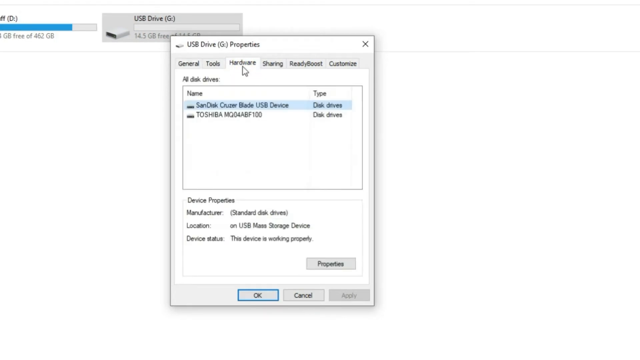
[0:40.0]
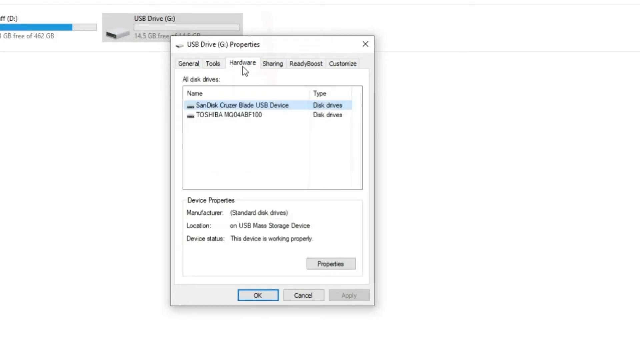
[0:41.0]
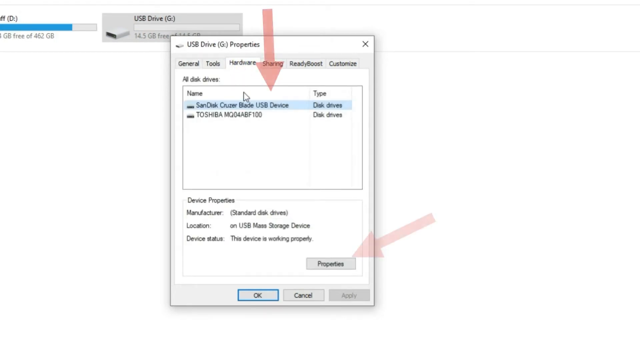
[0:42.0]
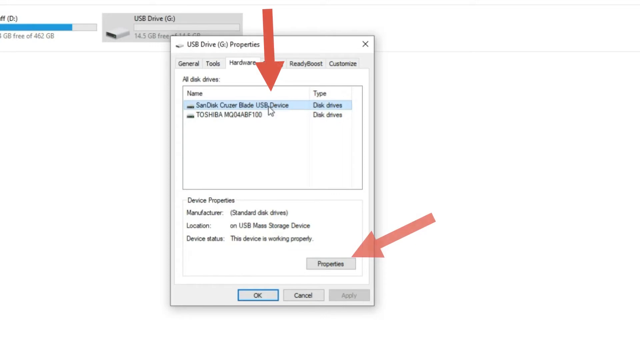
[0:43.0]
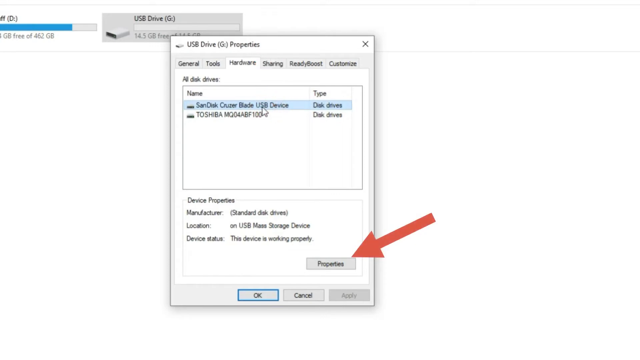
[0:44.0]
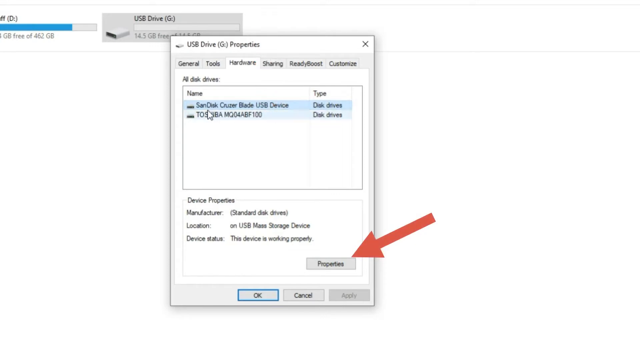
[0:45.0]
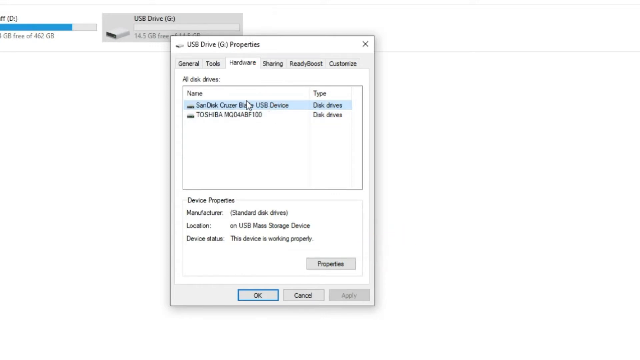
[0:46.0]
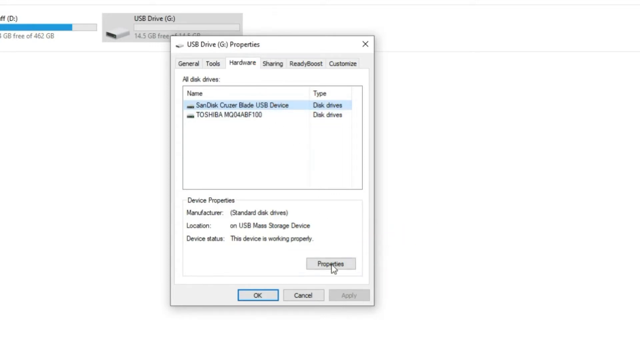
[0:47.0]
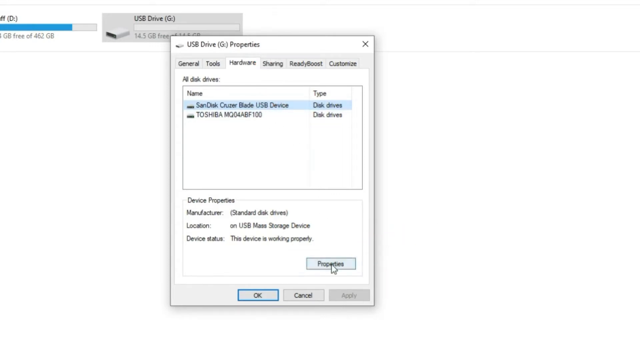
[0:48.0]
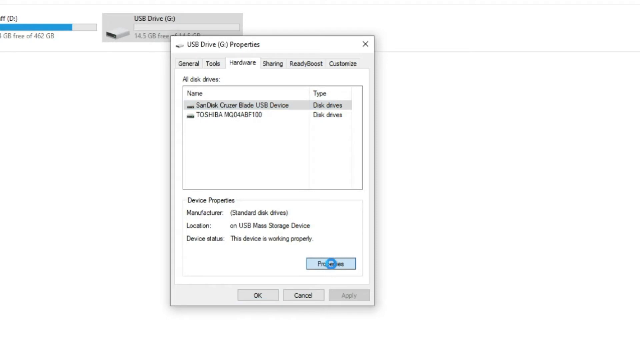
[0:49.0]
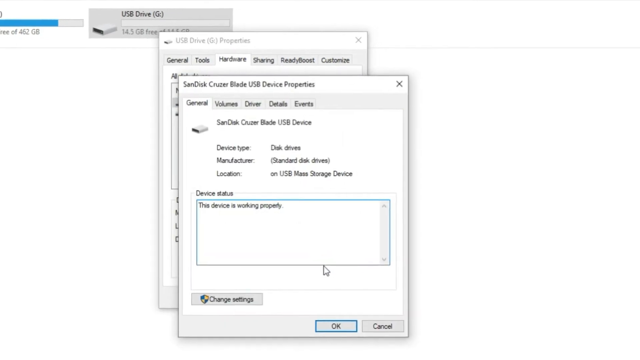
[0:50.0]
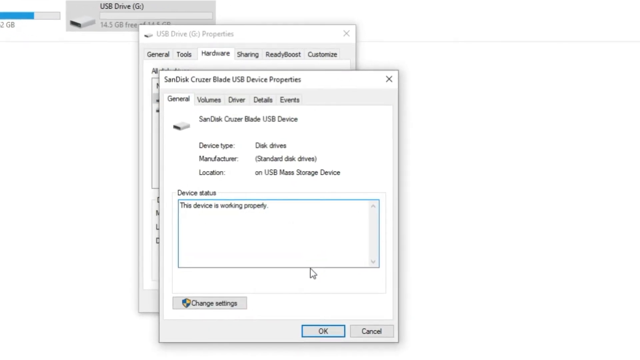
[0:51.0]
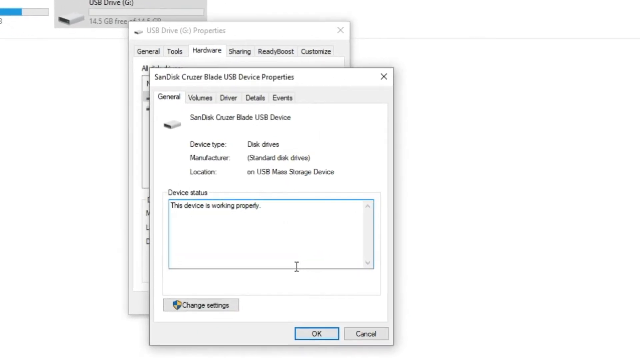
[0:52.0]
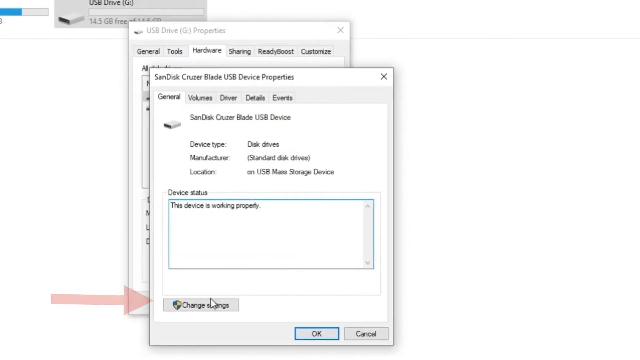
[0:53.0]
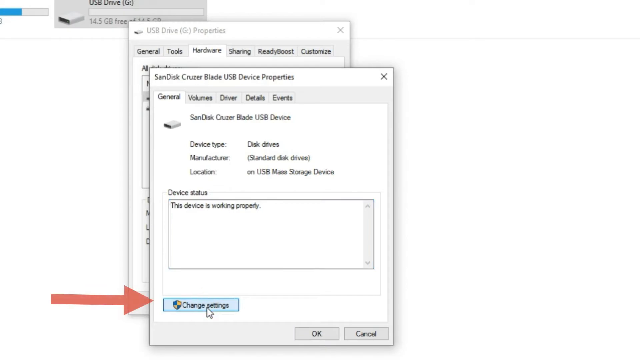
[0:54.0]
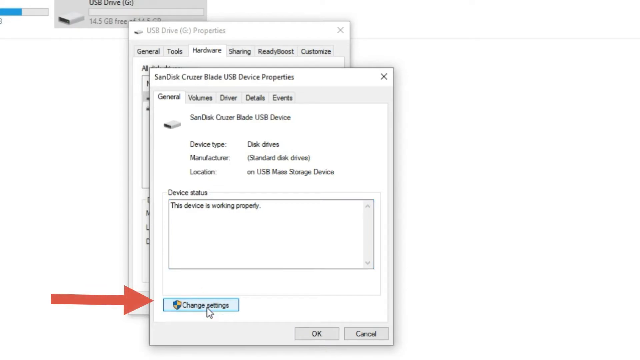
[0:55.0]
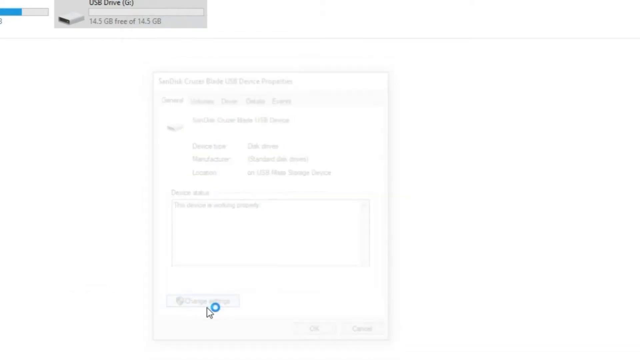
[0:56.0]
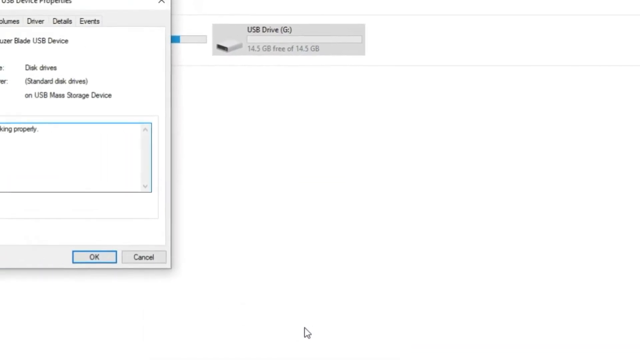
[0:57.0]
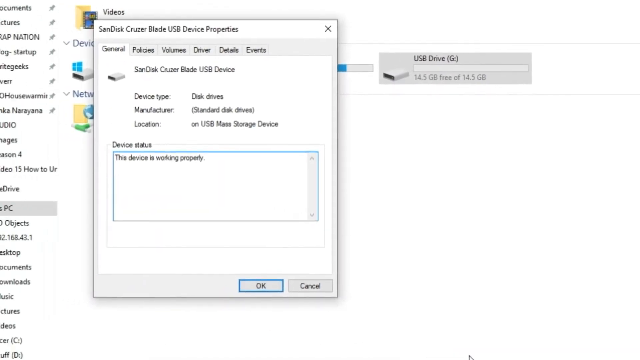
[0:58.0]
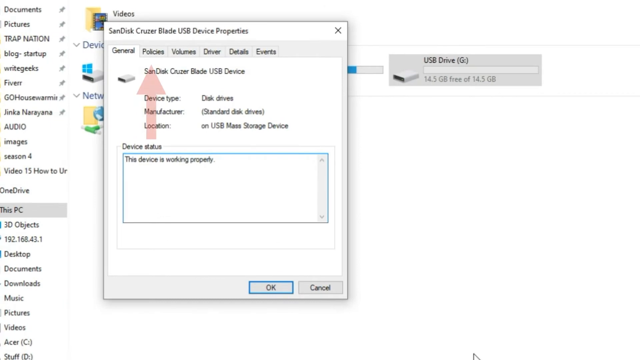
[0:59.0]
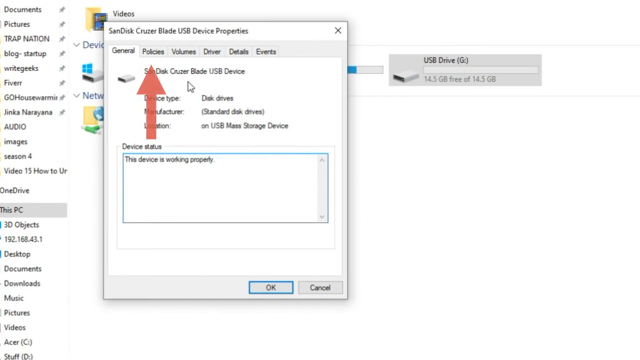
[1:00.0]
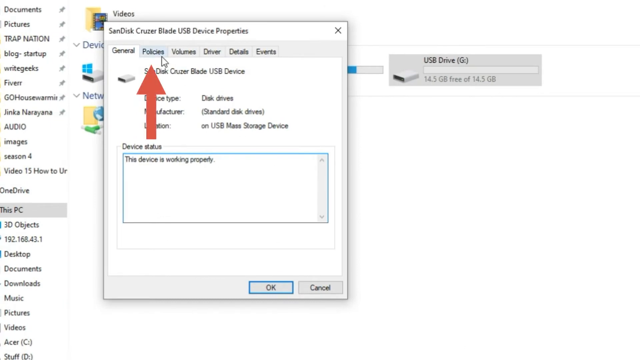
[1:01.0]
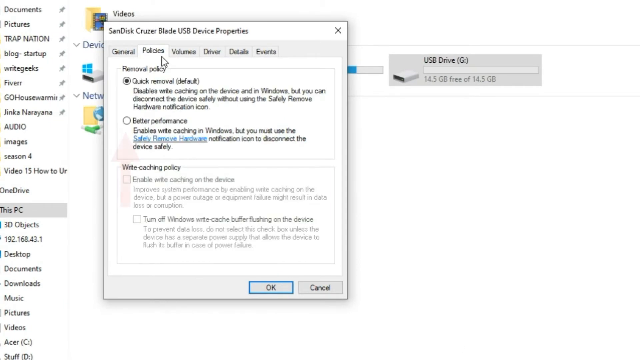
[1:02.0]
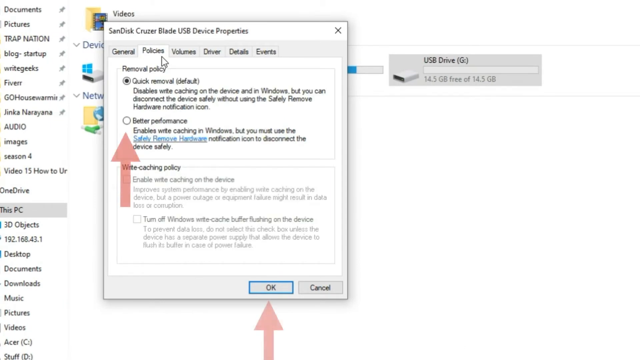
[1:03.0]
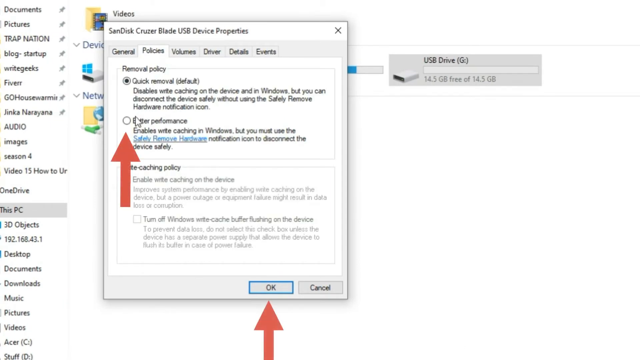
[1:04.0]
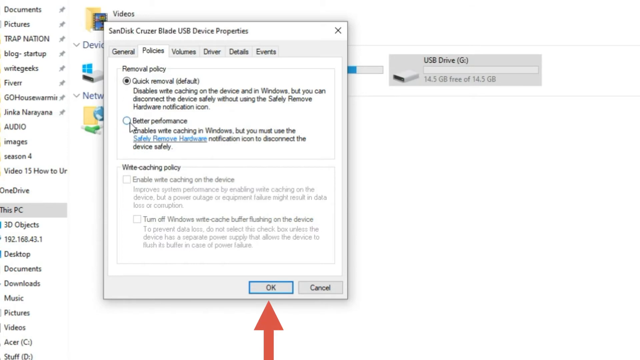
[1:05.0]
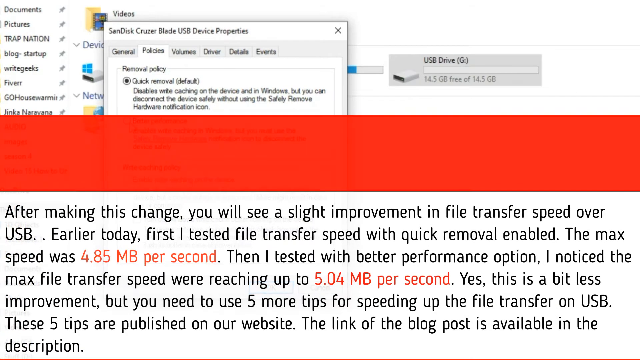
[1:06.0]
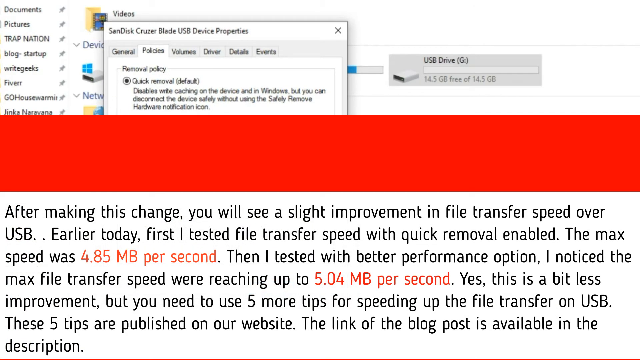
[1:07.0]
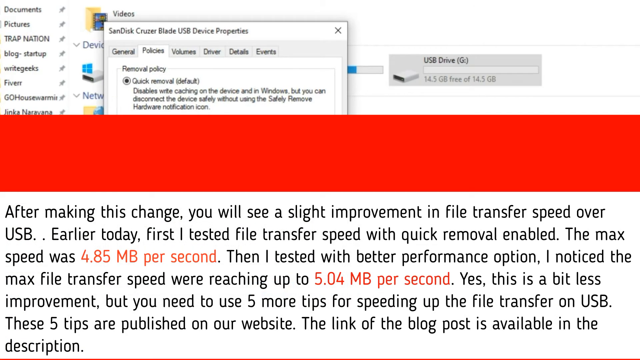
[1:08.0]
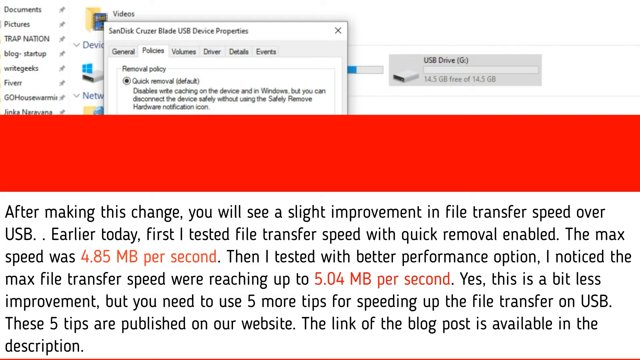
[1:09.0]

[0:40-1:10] SanDisk properties are shown, with the status "the device is working properly" and a change settings option. Clicking change settings opens another screen on the General tab; he then goes to position, where it says "quick removal" as the default, and clicks on better performance. Red arrows show where he is going. Text reads "After making this change, you'll see a slight improvement" in file transfer.